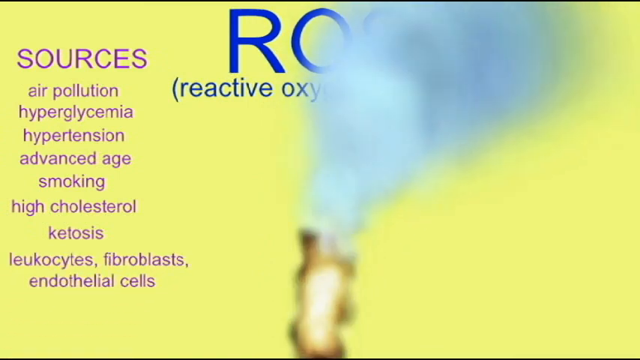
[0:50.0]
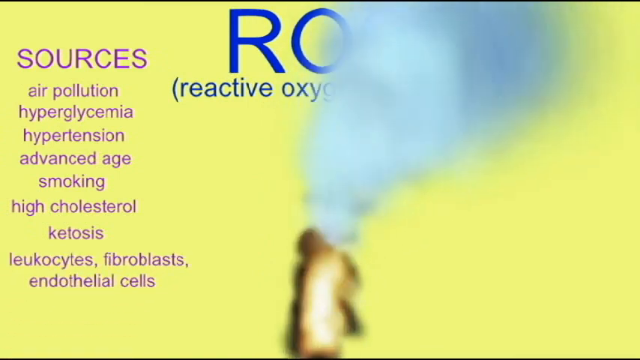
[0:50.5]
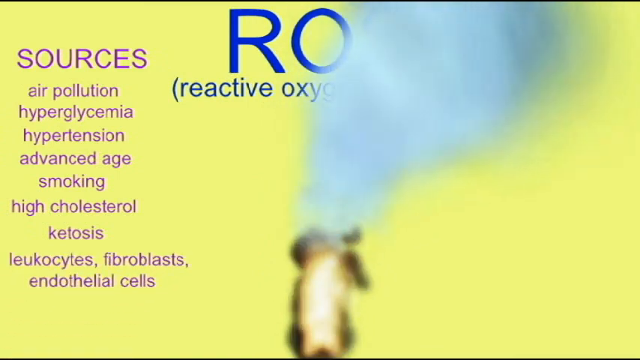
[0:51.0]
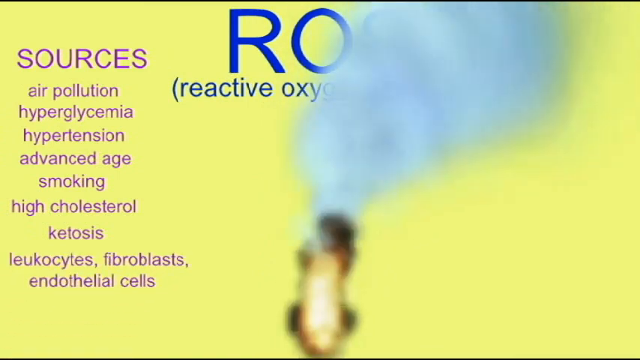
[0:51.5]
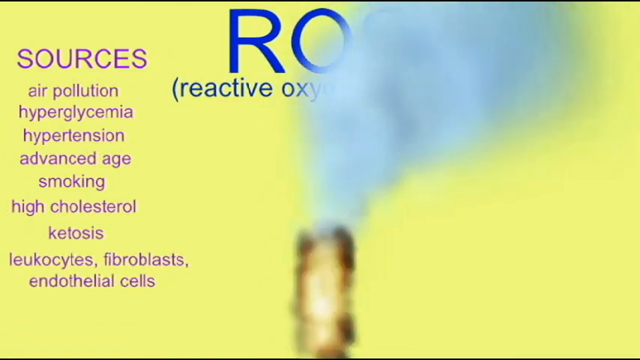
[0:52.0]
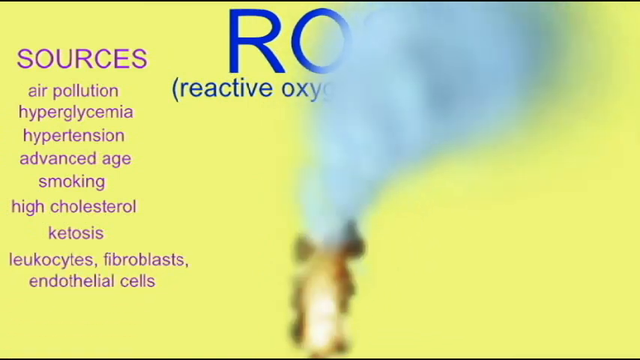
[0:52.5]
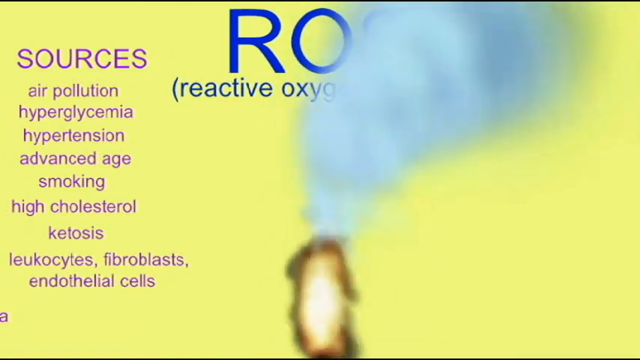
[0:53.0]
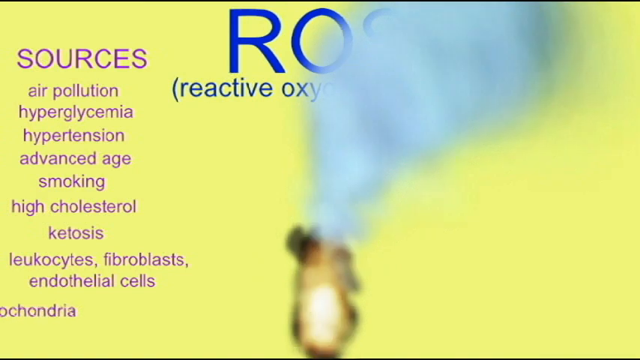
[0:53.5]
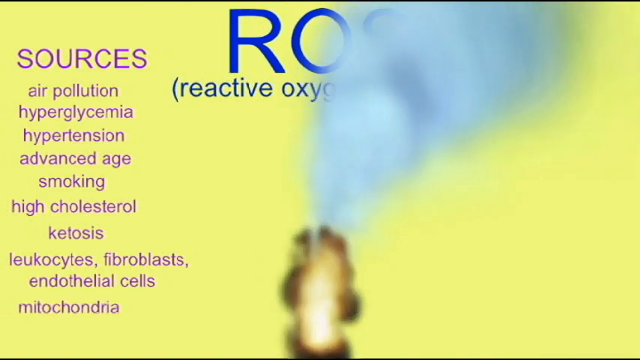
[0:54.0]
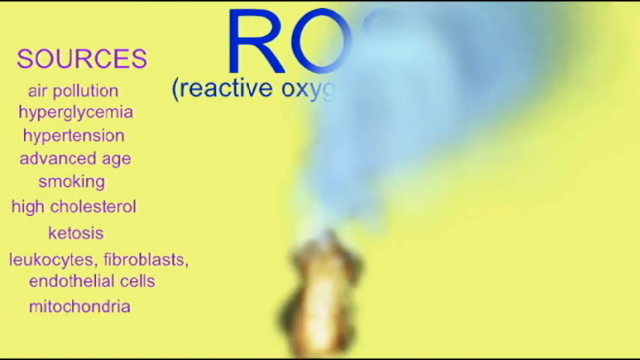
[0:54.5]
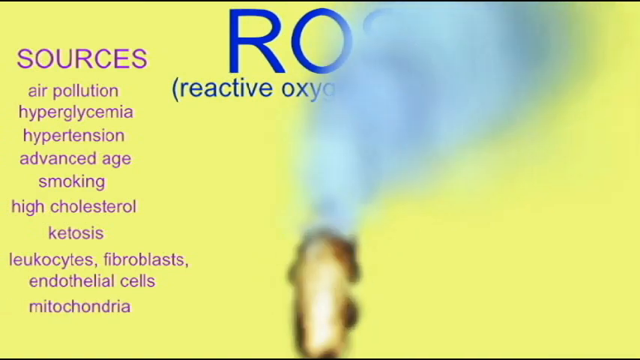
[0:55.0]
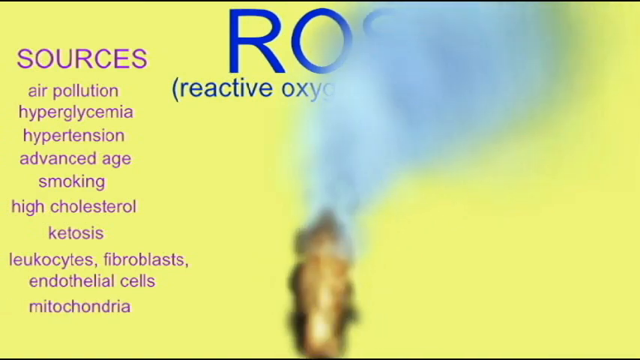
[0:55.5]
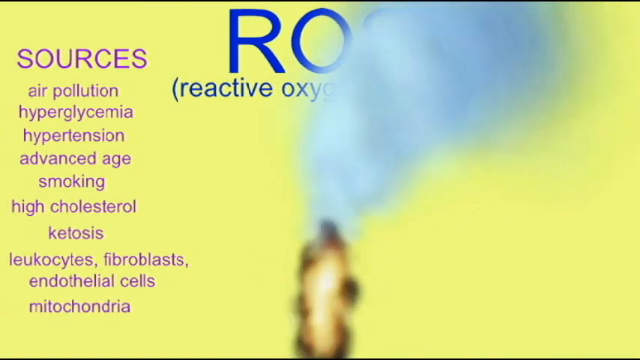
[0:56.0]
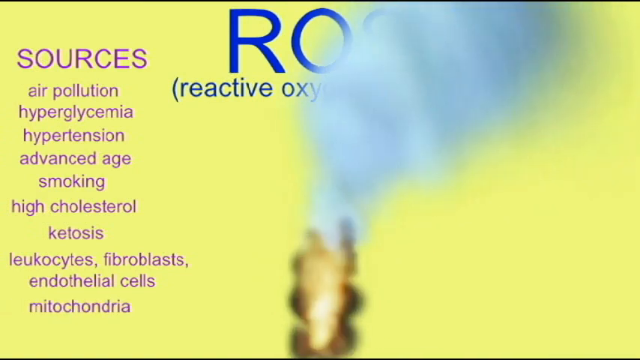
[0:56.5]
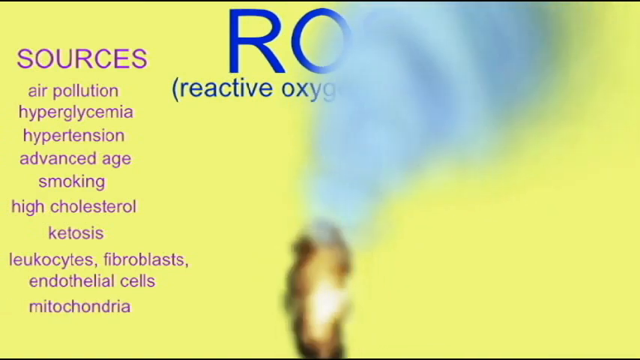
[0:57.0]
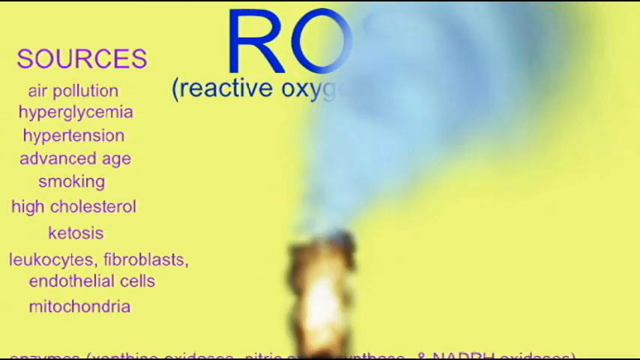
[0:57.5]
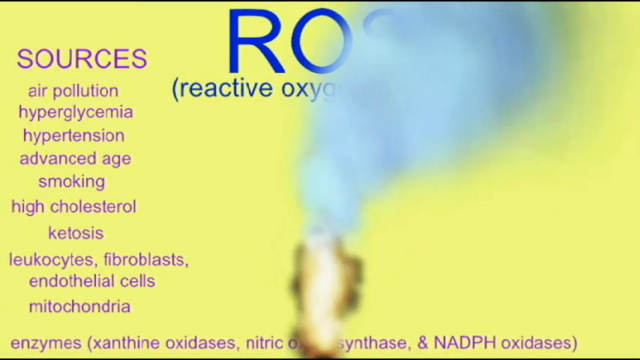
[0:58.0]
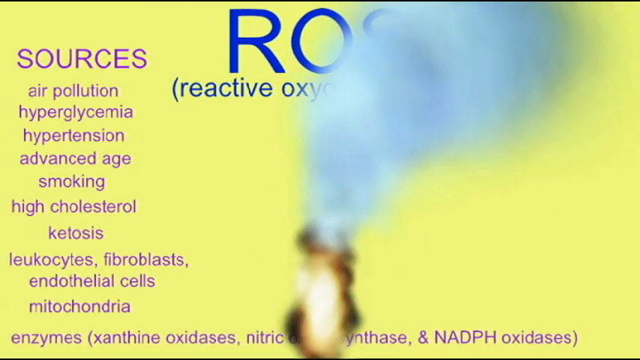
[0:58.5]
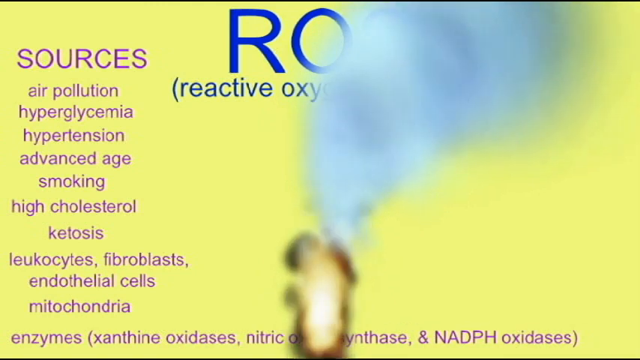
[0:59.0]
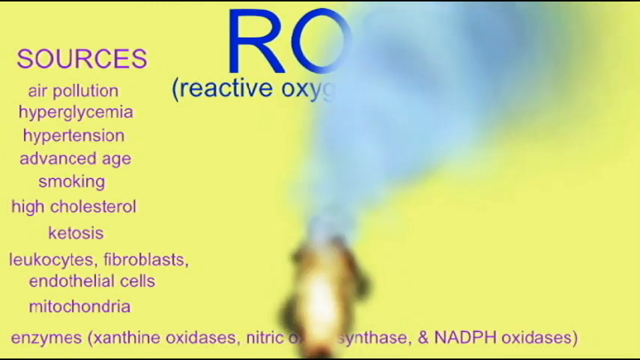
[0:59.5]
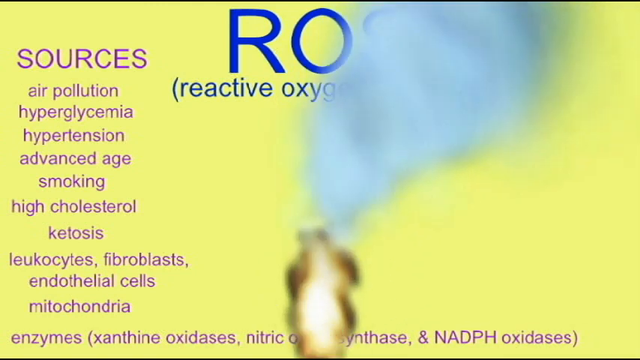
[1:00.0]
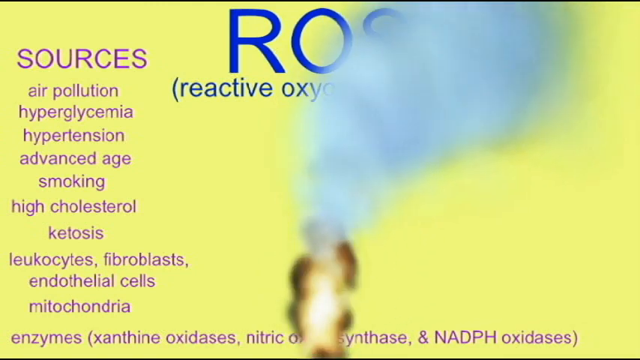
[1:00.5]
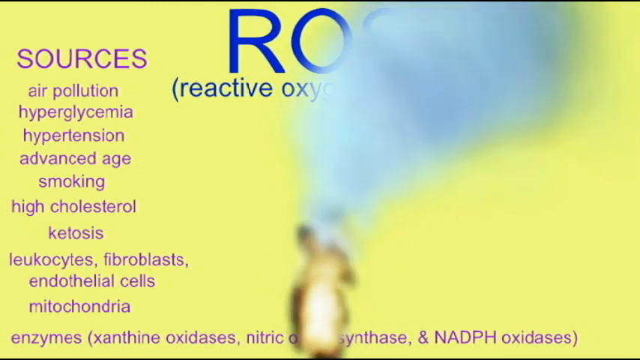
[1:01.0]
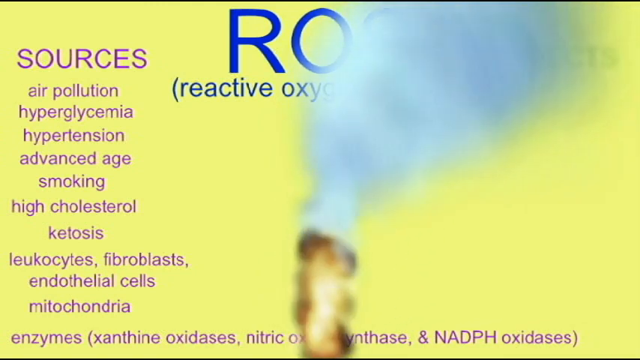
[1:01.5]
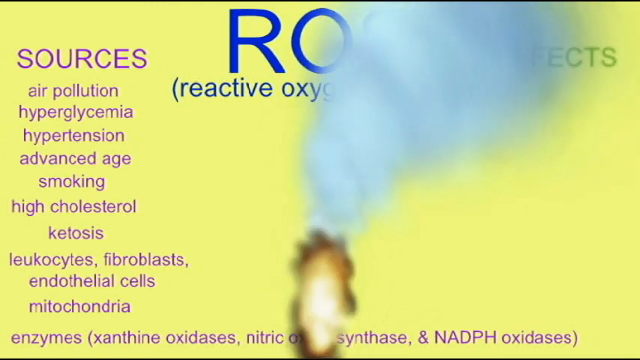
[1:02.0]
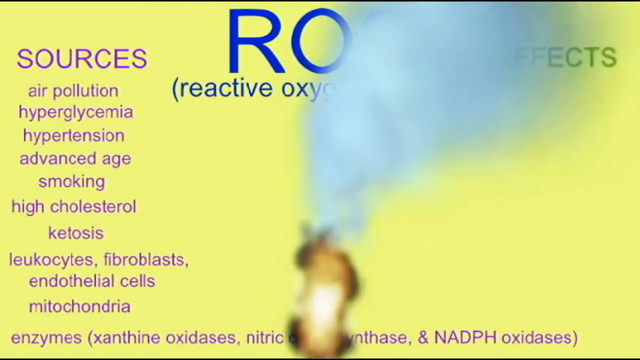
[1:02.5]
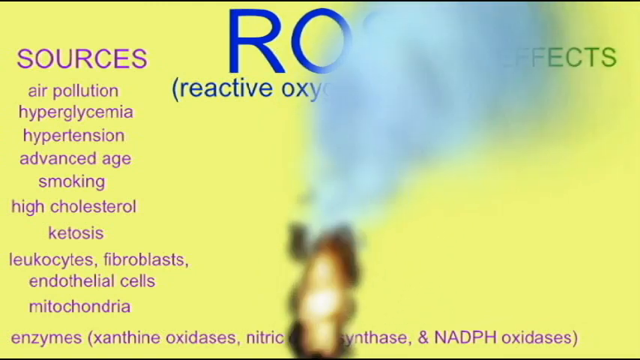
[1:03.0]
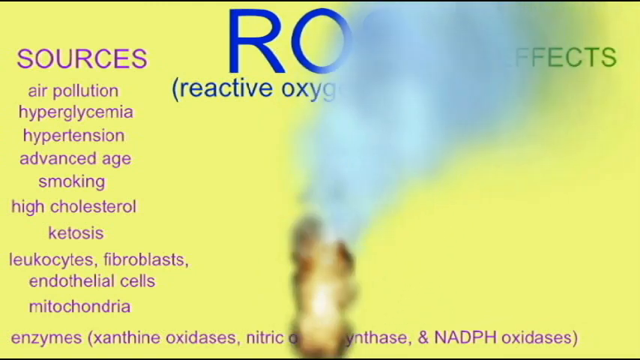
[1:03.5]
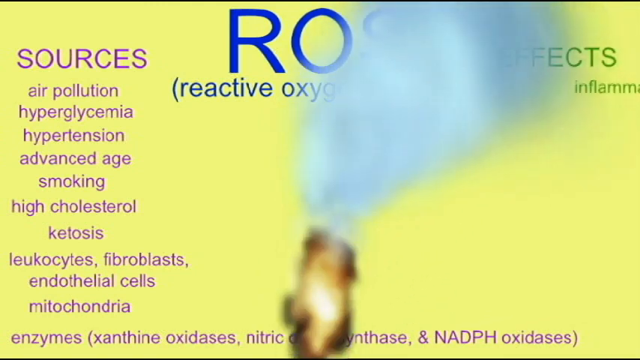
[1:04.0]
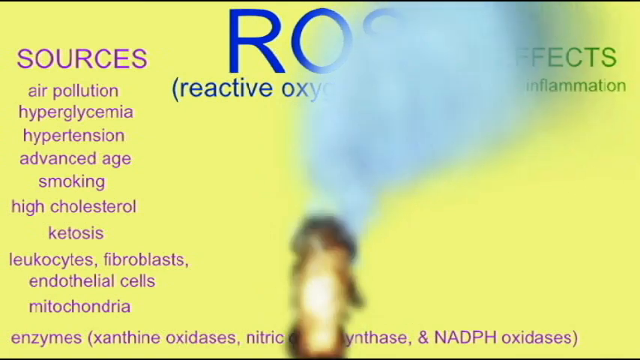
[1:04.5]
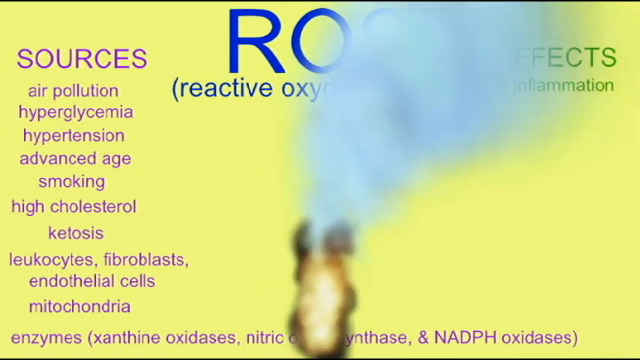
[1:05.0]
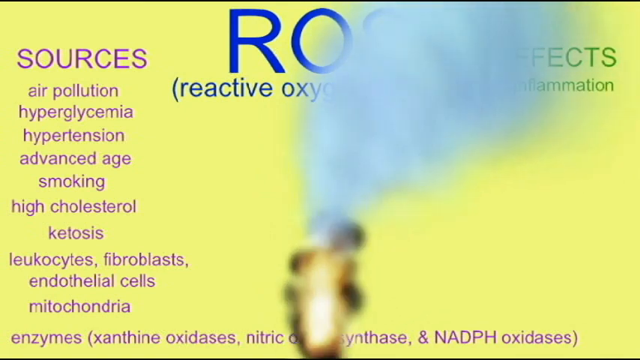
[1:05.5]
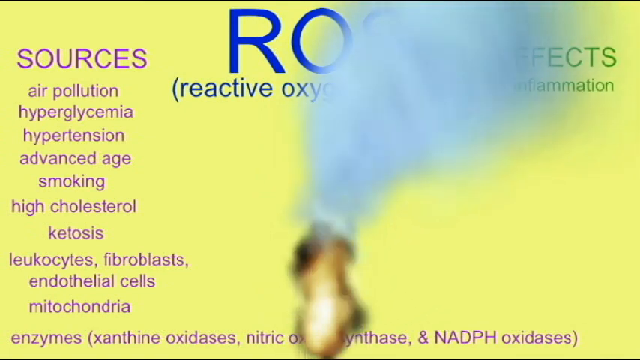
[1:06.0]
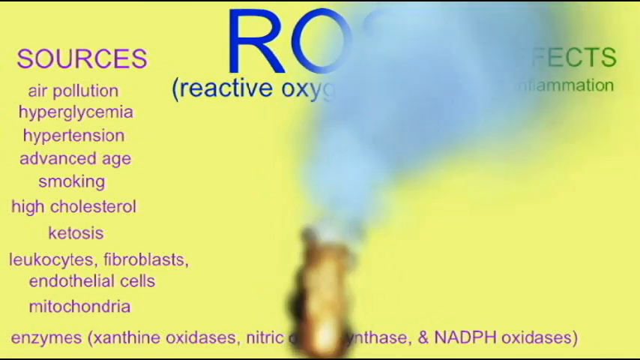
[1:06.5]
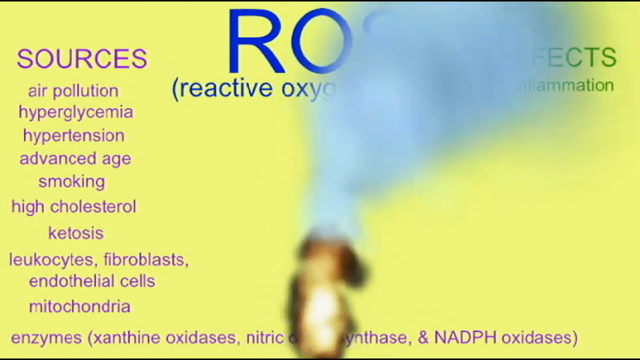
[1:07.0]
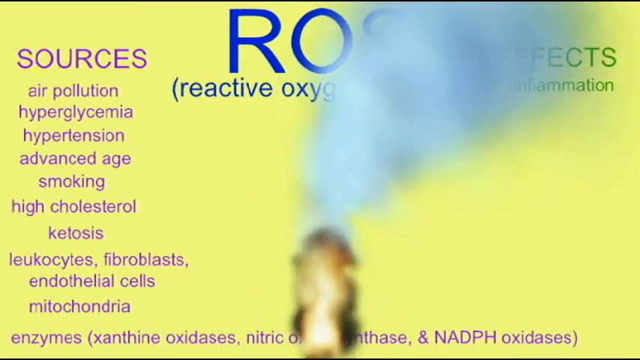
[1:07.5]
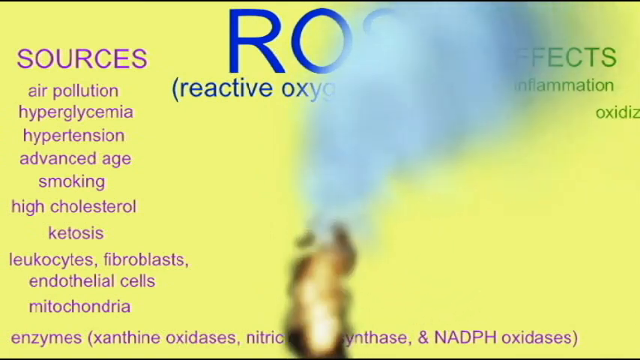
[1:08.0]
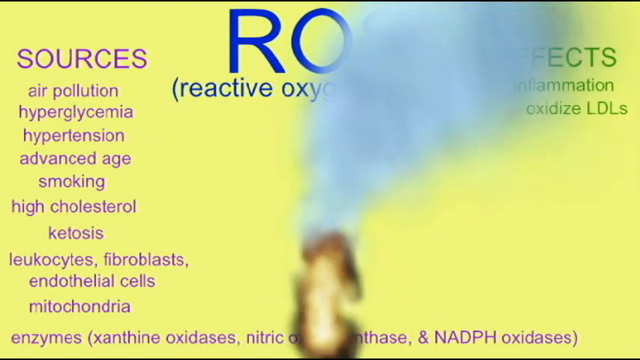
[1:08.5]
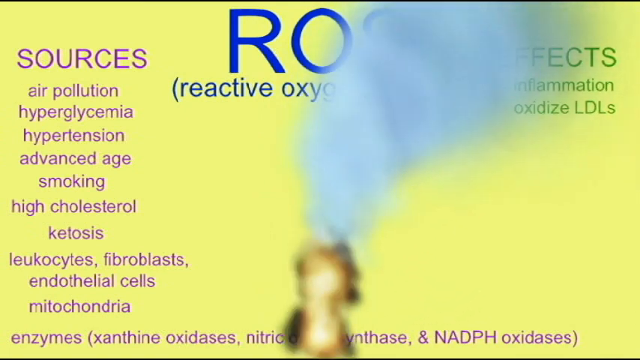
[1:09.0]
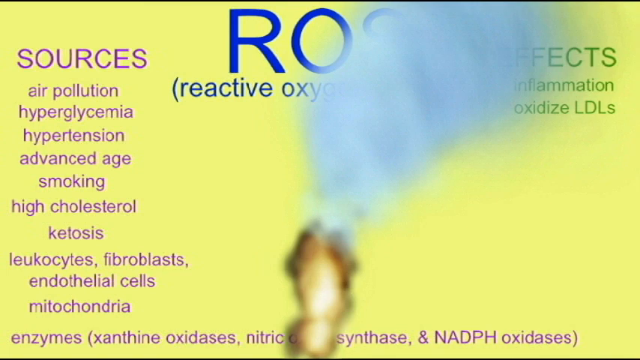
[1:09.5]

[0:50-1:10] The scene has a yellow background with lavender text to the left. At the top in the middle is blue text behind a plume of gray smoke, which comes from an amber flame at the bottom in the middle of the frame. The blue text at the top is the largest and reads "R-O-S," with "reactive oxygen" in parentheses below it. To the left, medium-sized lavender text reads "sources," and below that the smallest lavender text reads "air pollution, hyperglycemia, hypertension, advanced age, smoking, high cholesterol, ketosis, leukocytes, fibroblasts, endothelial cells." The flame is in motion and crackling; it looks live and very realistic, and the smoke billows. Green text begins to appear at the upper right-hand side, but it is behind the plume of smoke and cannot be read.